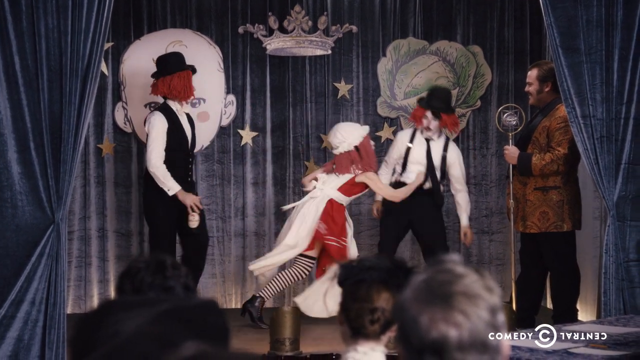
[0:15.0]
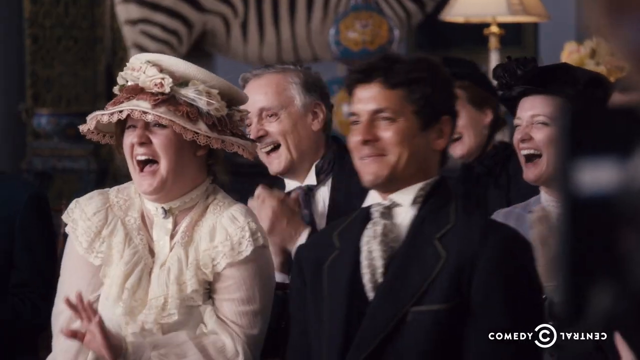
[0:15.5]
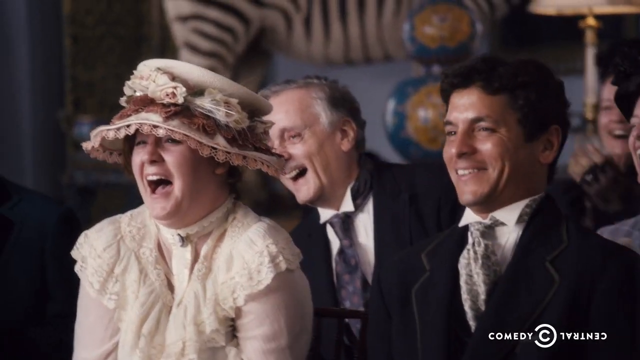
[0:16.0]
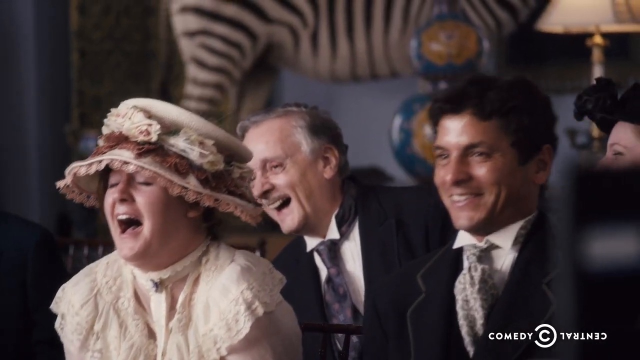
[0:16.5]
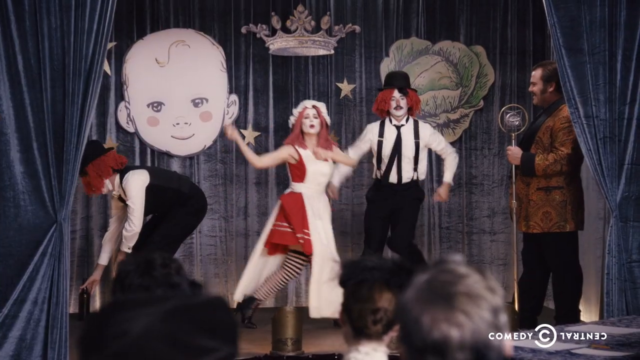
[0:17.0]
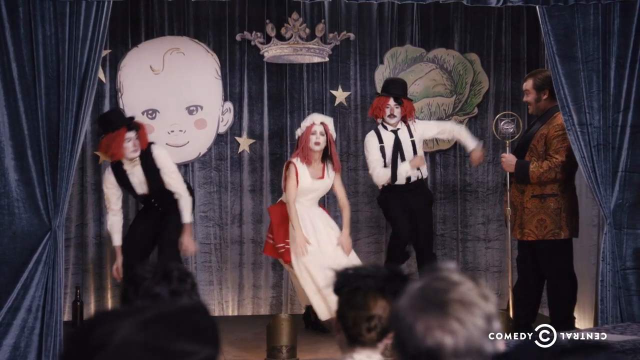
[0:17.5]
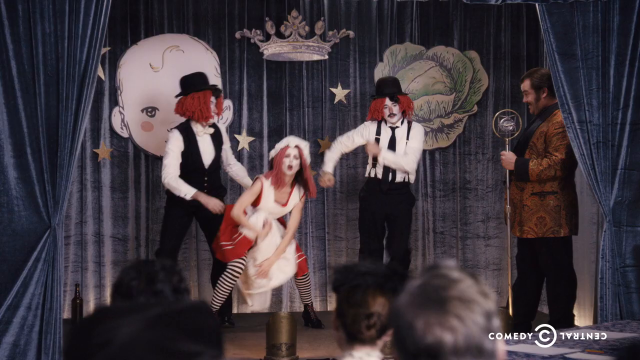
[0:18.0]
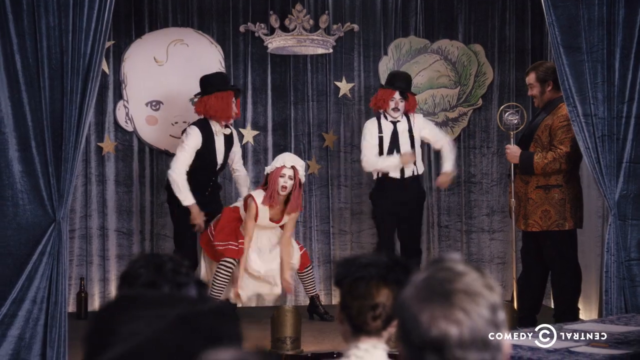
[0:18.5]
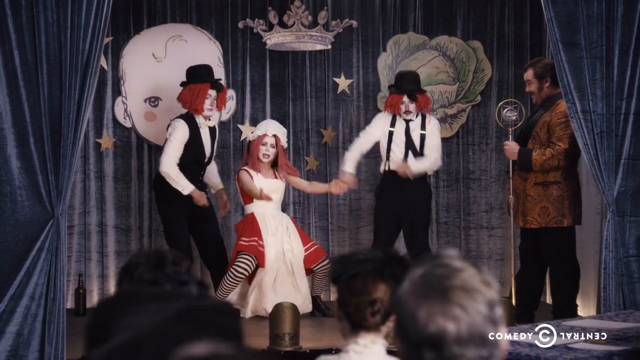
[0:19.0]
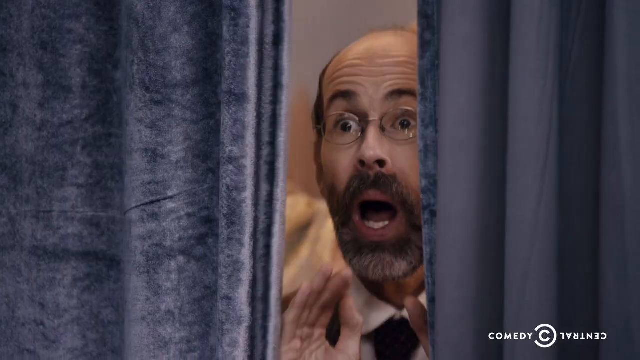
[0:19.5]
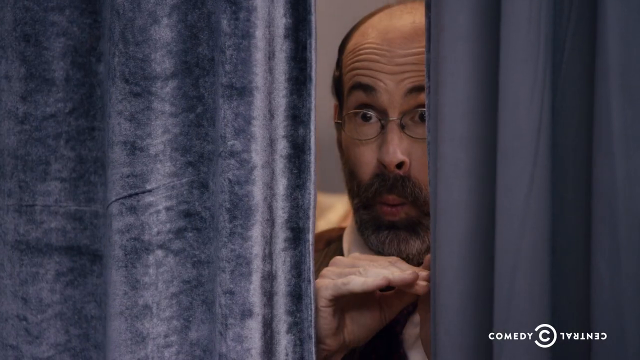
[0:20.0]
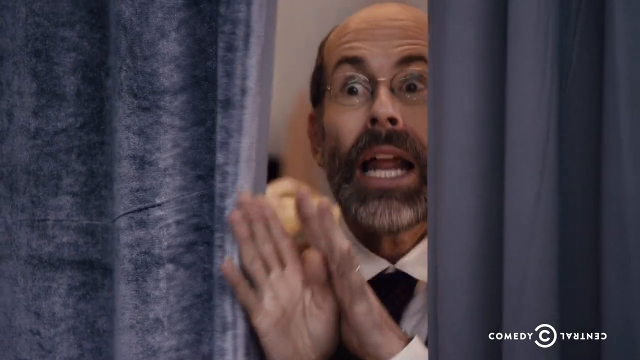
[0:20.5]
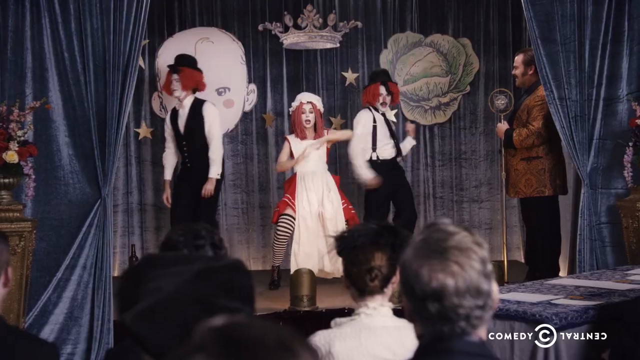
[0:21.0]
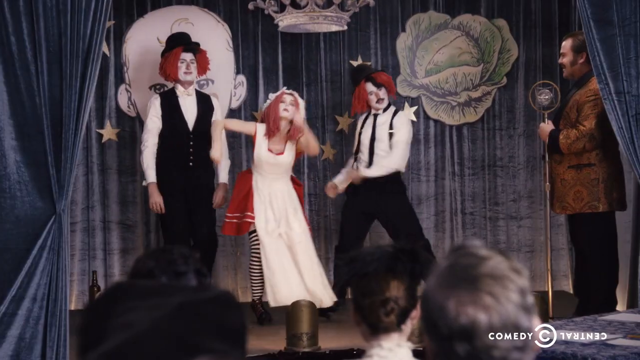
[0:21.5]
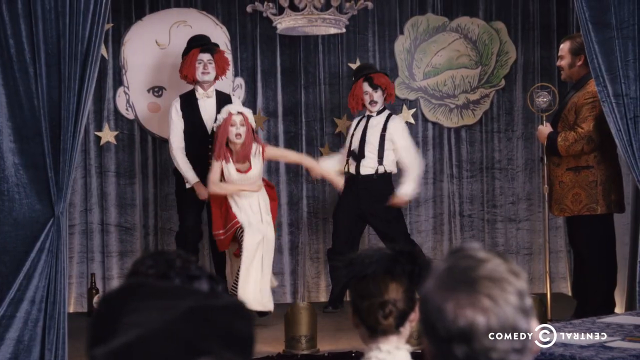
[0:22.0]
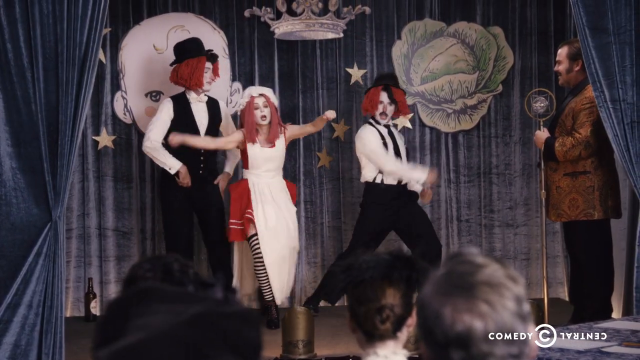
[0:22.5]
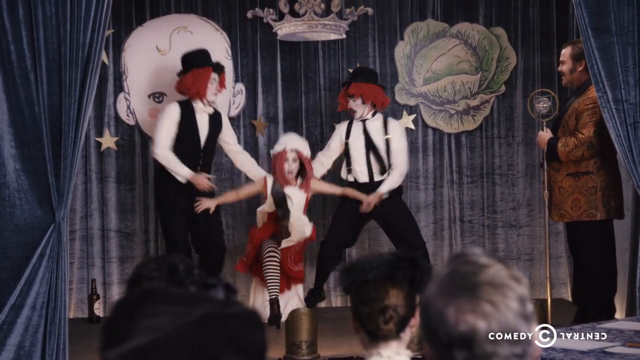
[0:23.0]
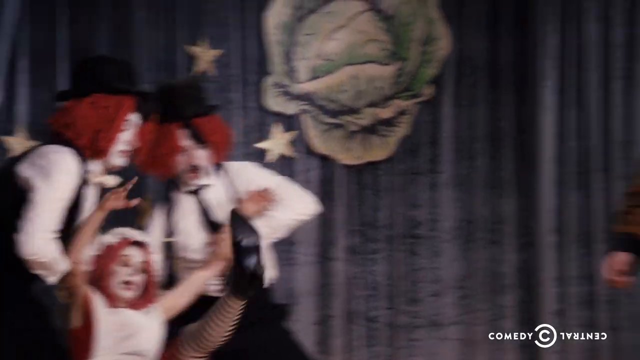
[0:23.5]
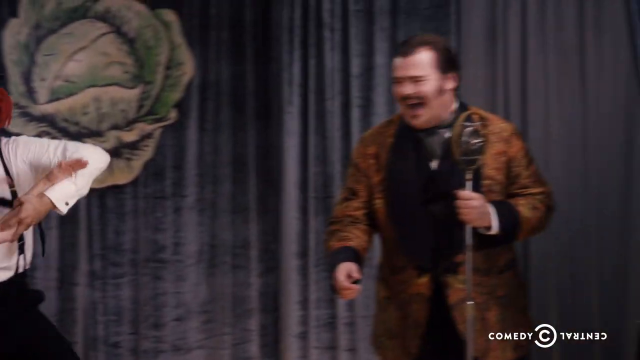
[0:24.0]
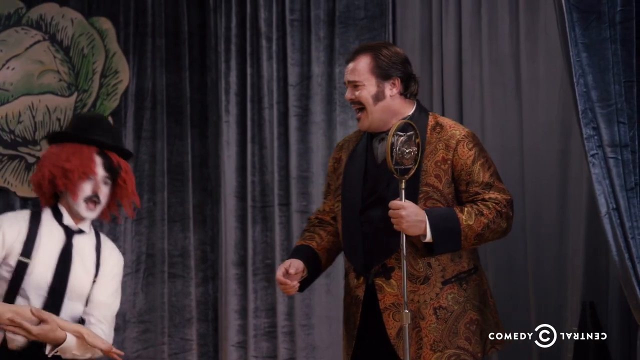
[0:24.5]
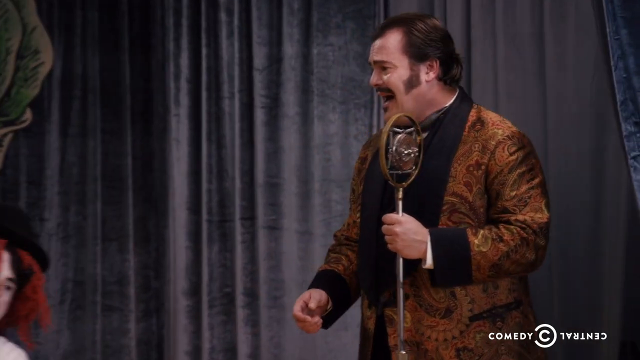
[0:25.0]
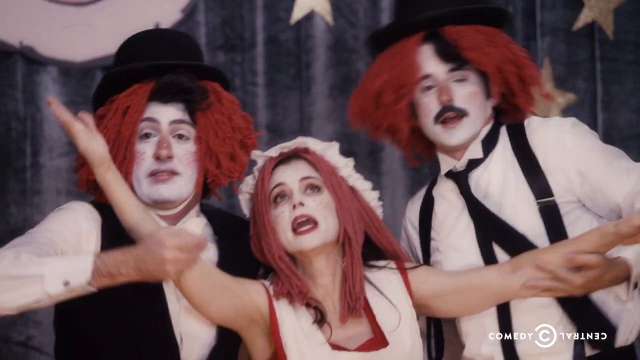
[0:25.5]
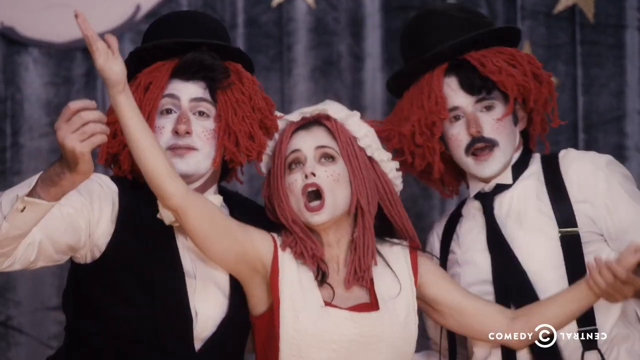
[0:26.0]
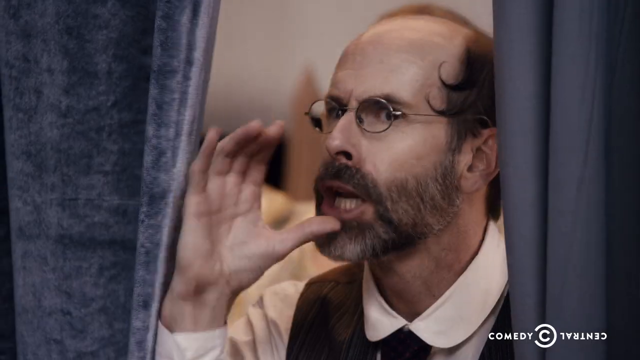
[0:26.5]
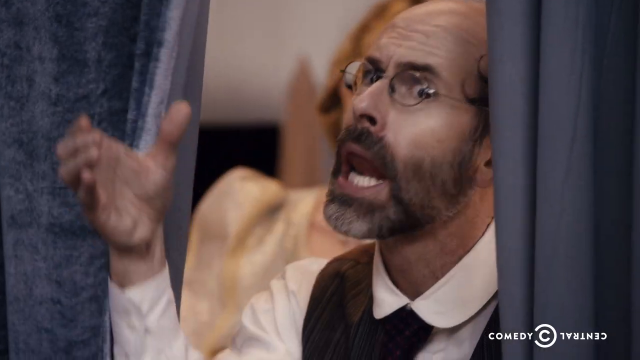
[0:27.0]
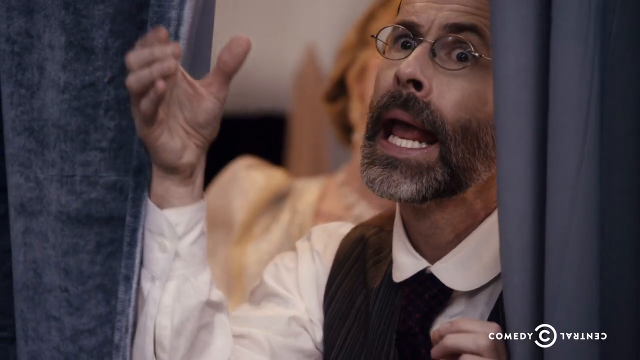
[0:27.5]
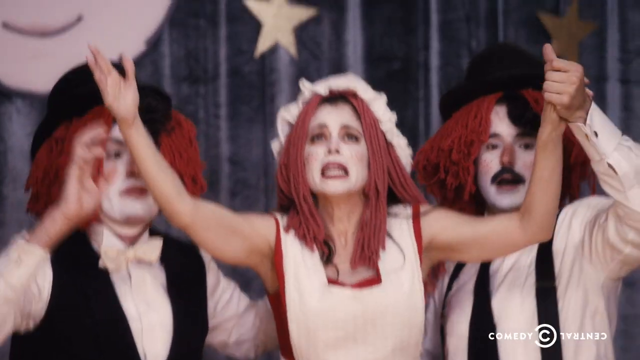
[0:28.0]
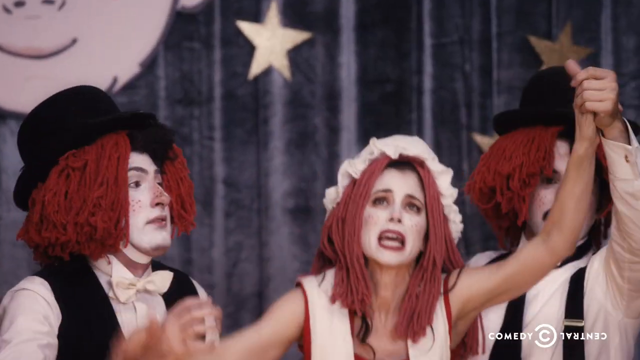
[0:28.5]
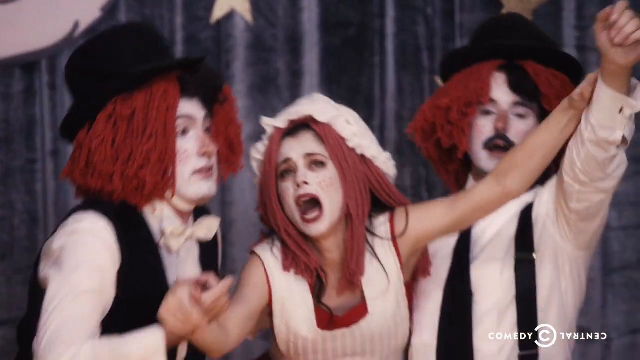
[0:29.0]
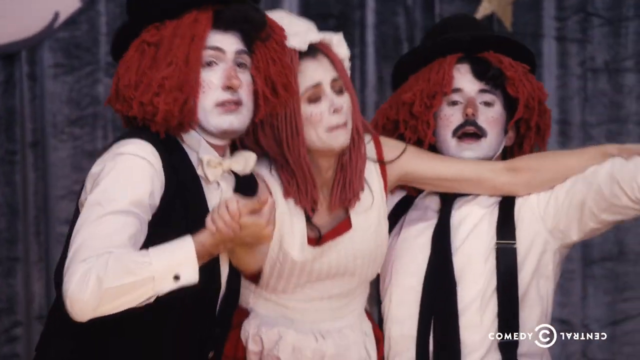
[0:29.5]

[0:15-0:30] The same Comedy Central show continues, with the performers apparently in what could possibly be the Victorian era. There are three men and one woman, plus another man offstage, and they appear to be doing a comedy performance, all performing together on the stage. They are dressed in what look like their outfits for the comedy show, very much in line with Victorian-era fashion. It is a Comedy Central program.